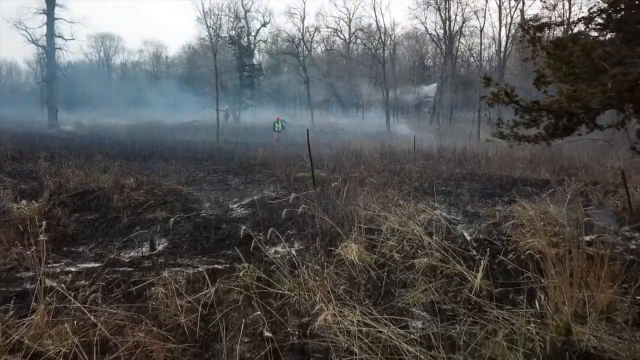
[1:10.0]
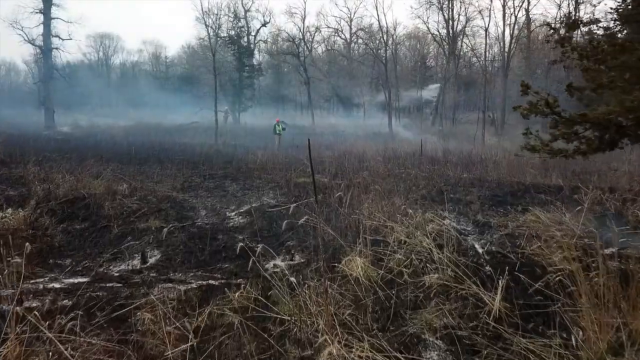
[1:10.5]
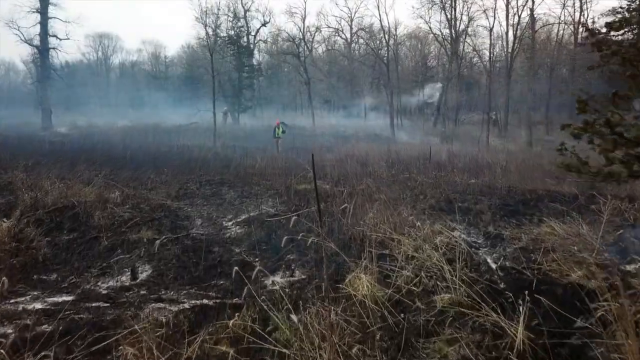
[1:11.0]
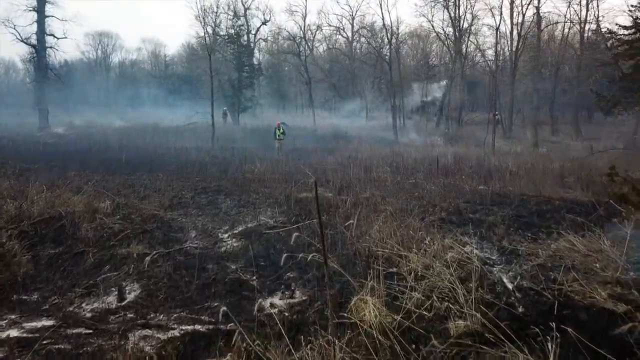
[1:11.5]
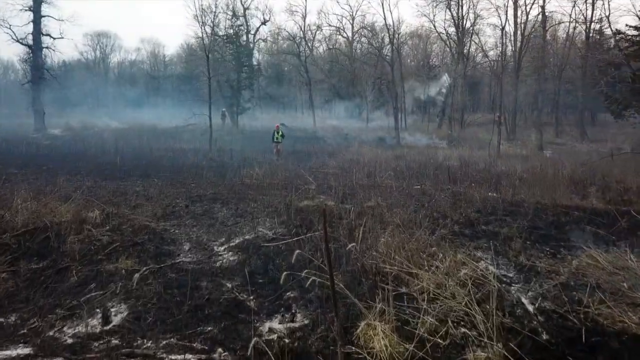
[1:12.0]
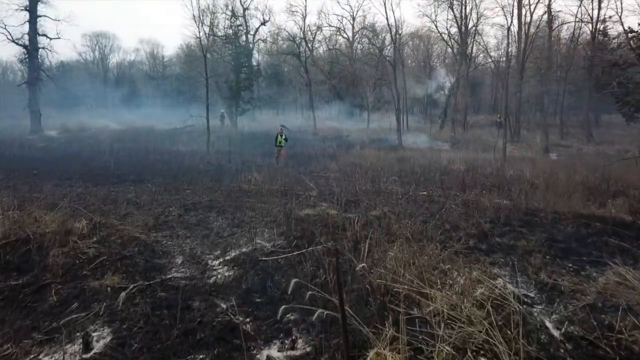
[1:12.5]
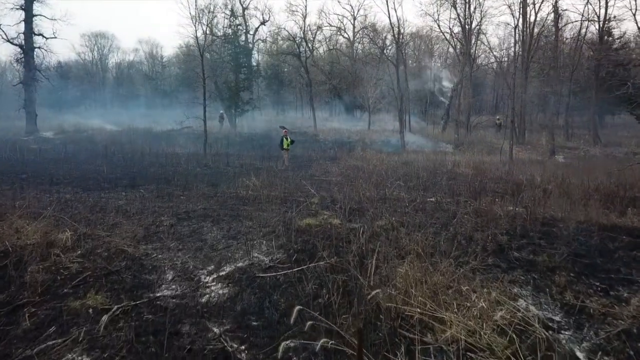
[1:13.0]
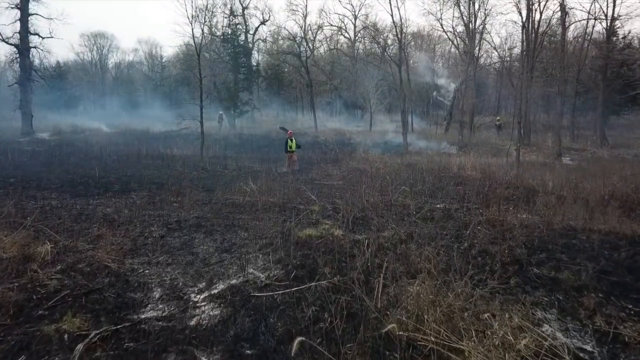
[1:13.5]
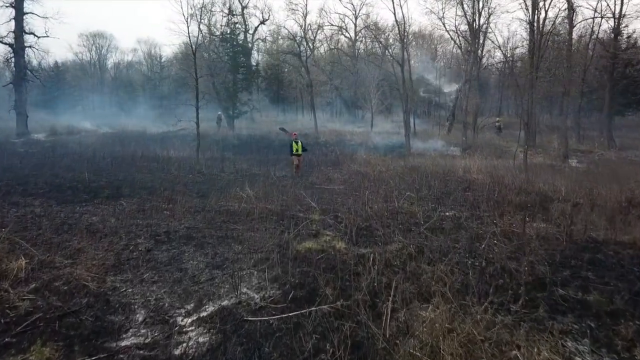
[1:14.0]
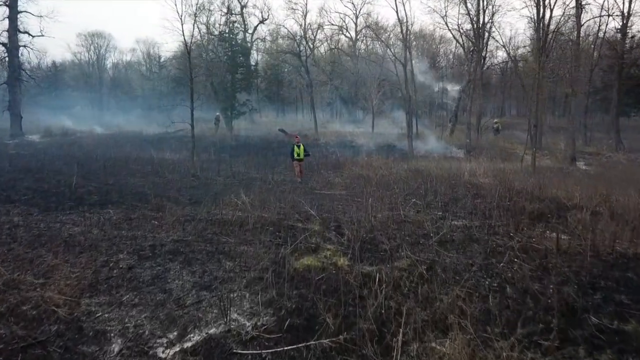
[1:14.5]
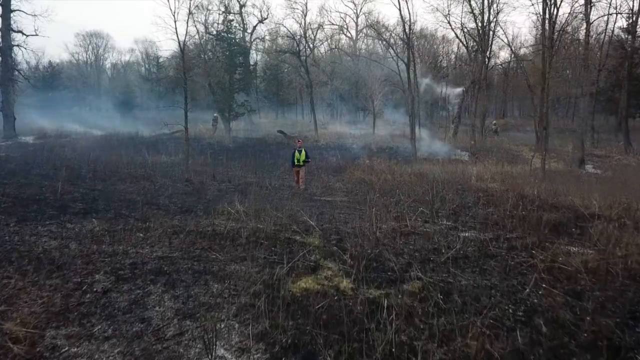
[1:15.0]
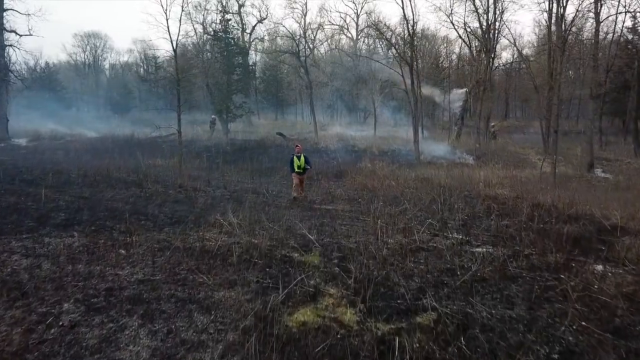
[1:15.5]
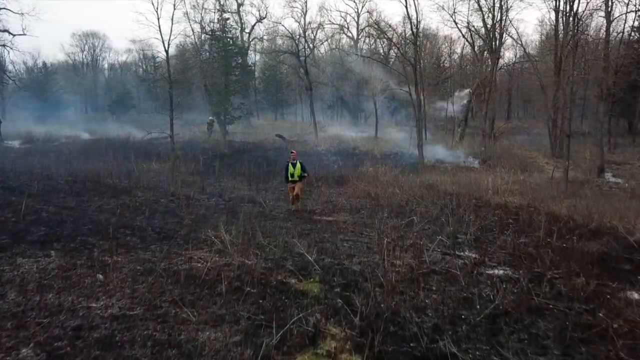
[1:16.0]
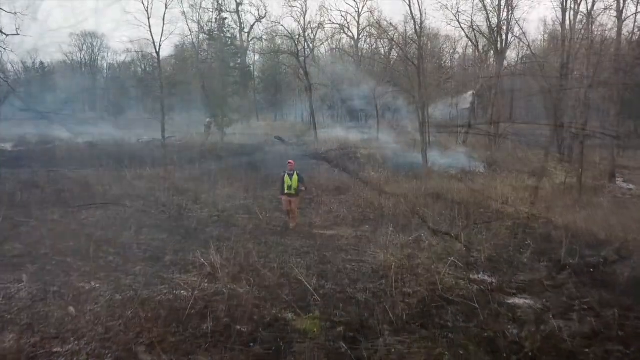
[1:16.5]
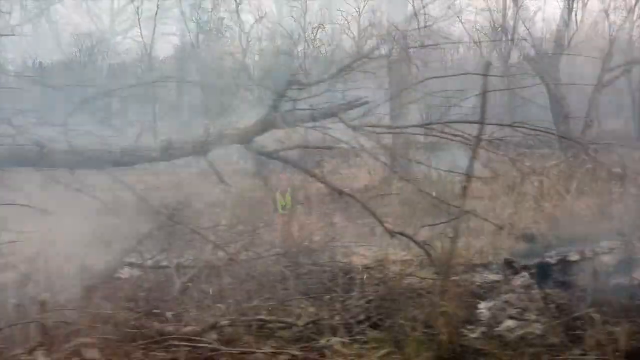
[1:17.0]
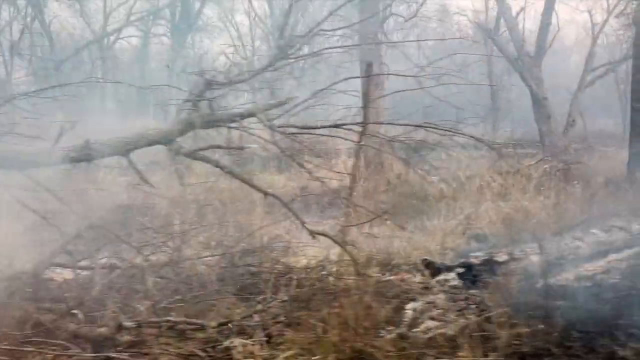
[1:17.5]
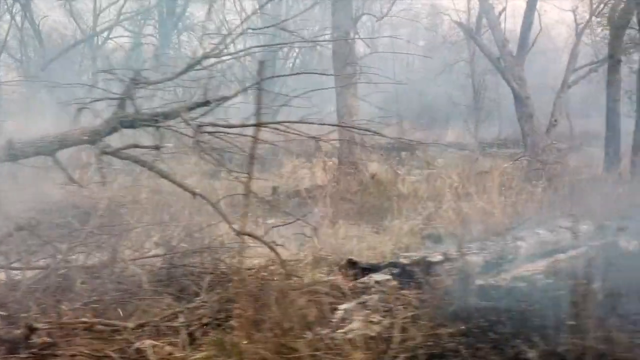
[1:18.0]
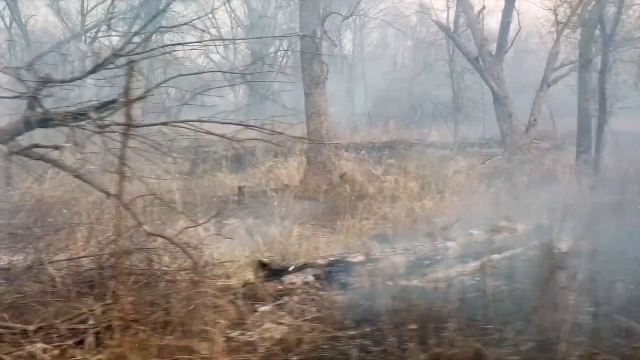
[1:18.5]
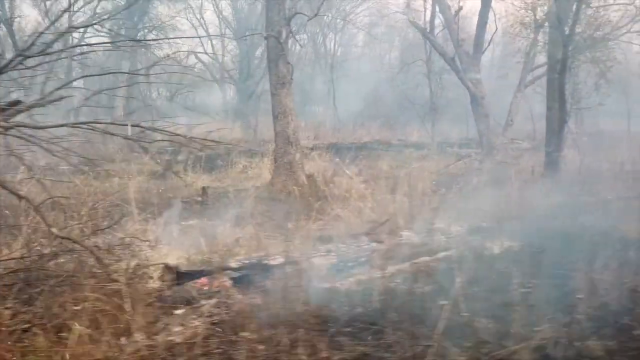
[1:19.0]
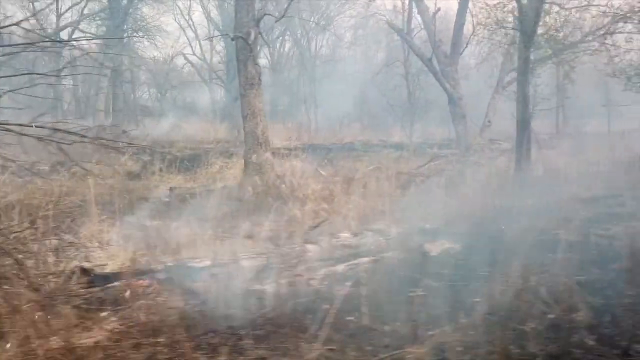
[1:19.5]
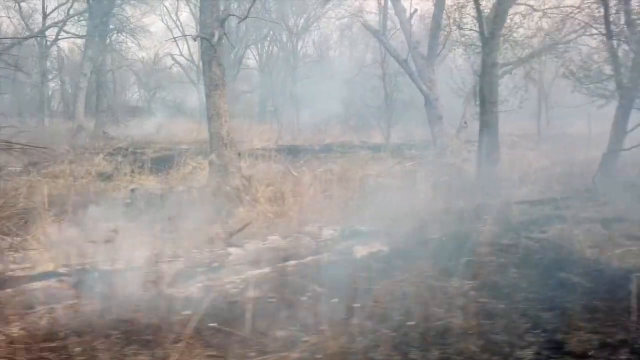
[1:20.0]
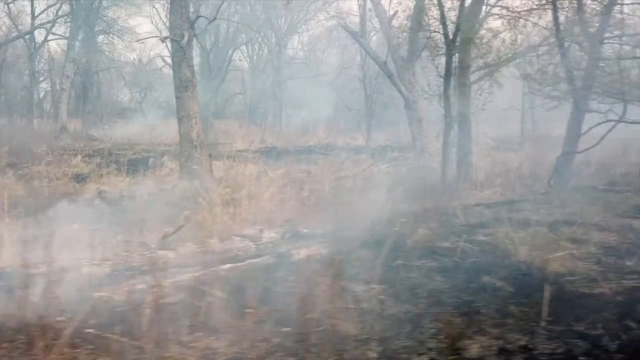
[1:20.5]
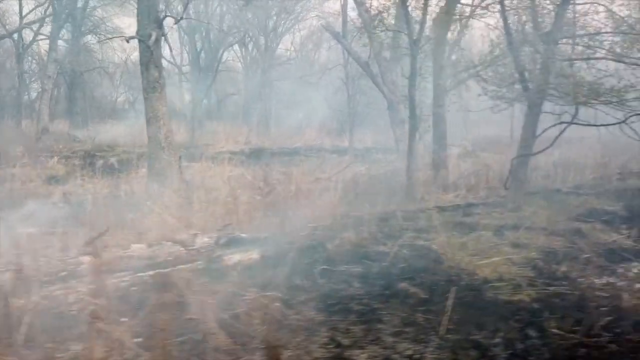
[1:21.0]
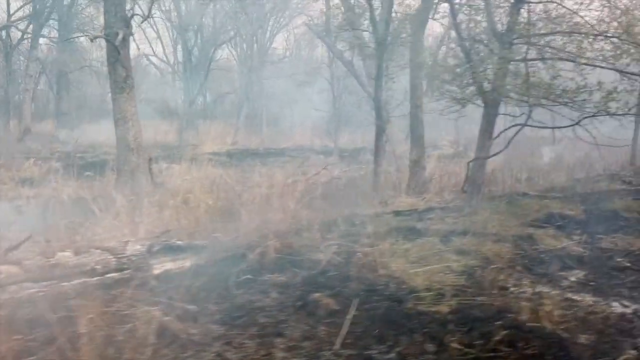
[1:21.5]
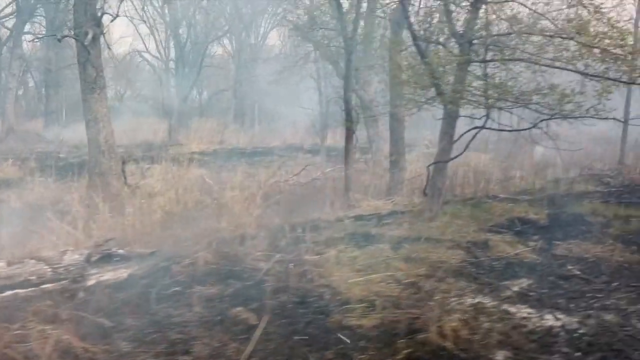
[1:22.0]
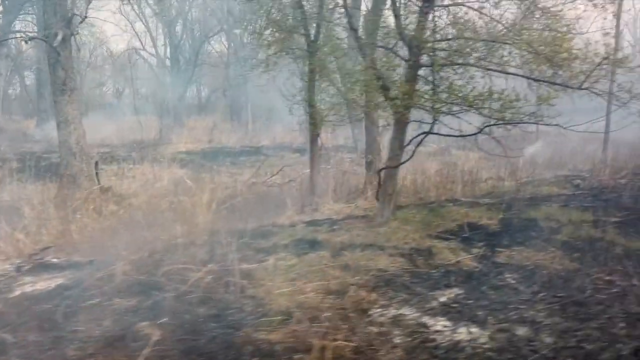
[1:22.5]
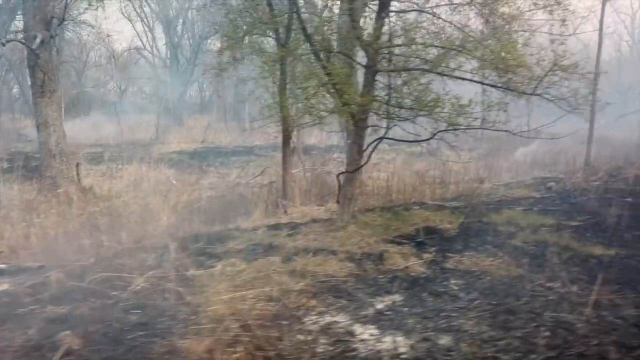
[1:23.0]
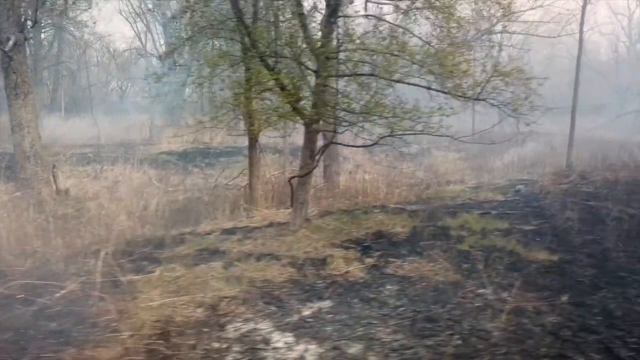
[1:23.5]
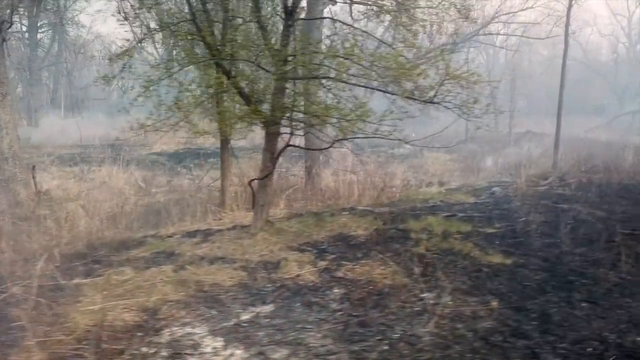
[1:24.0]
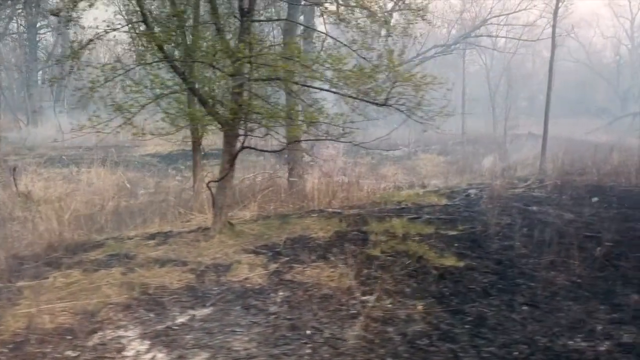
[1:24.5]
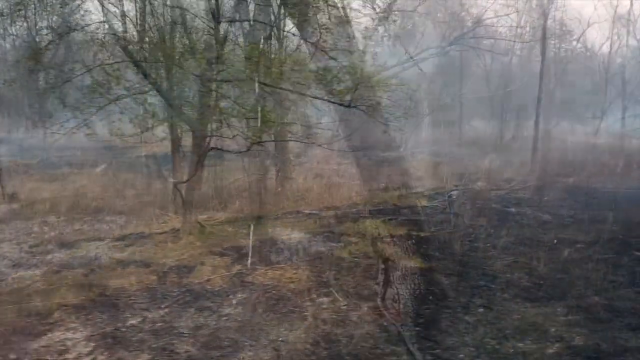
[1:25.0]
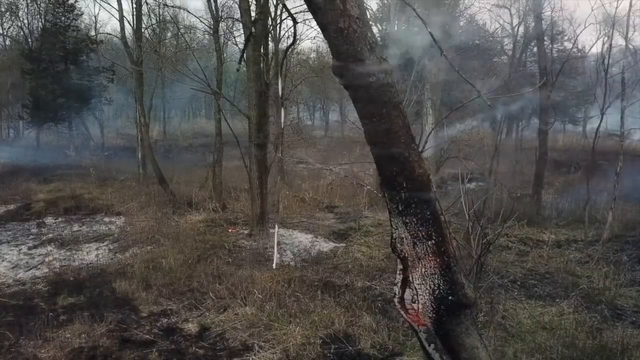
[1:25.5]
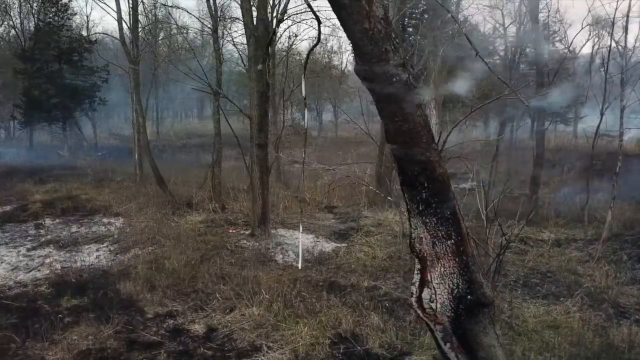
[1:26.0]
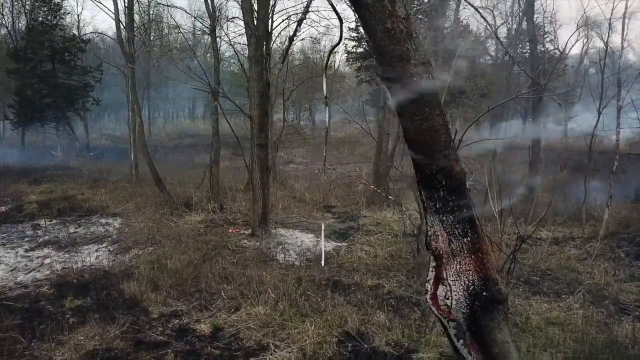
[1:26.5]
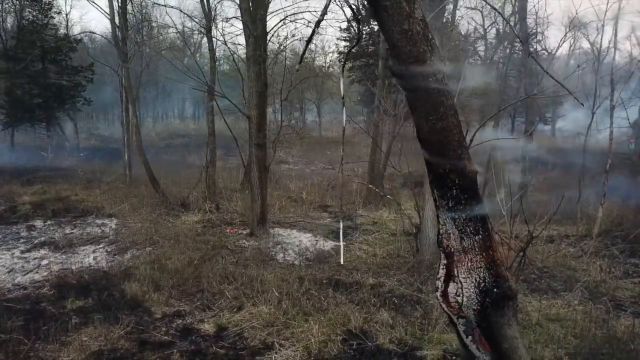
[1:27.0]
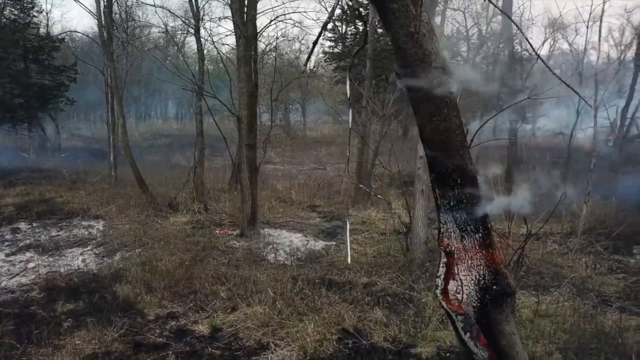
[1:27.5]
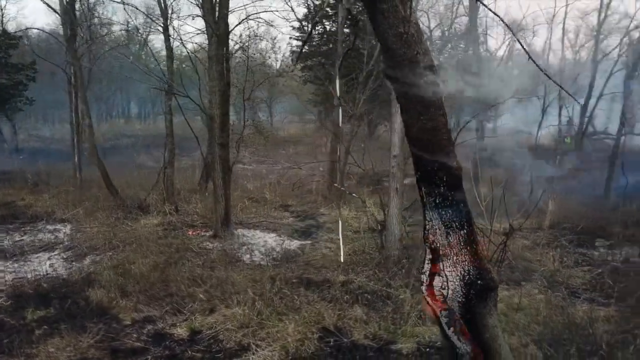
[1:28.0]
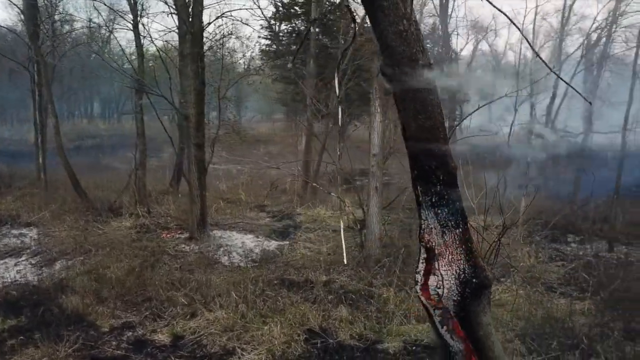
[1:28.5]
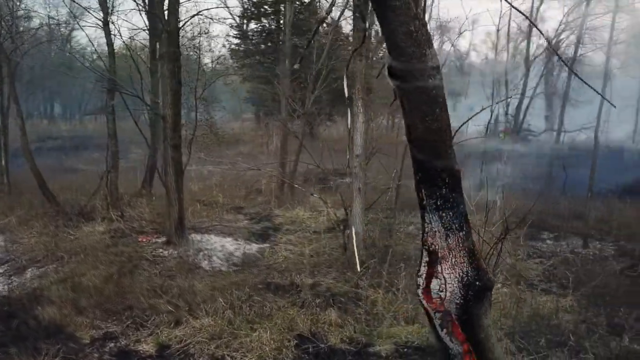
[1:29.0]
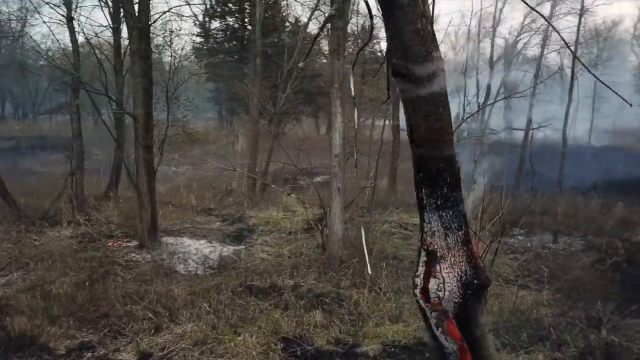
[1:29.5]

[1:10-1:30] A forest where a fire was started to clean the area is shown. A man wearing a bright yellow safety vest walks through the area toward the camera, and someone walks along filming. Some trees give off a smoky gray appearance, being somewhat burned. Some of the terrain on the ground has been burned, while in other places trees higher up were burned. A lot of smoke comes up from the blackened areas, and a little smoke comes out of various trees, as if the fire is not progressing much at this point.